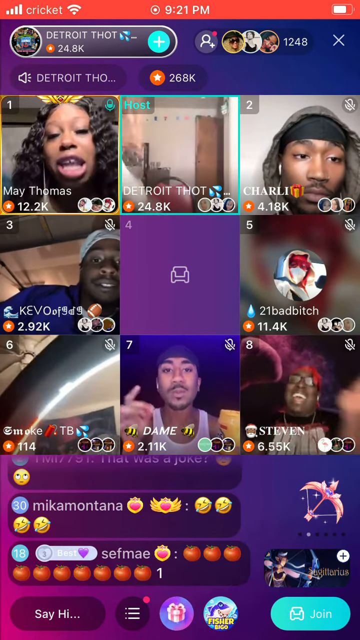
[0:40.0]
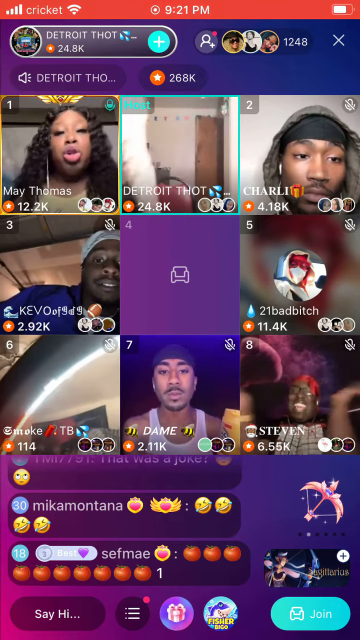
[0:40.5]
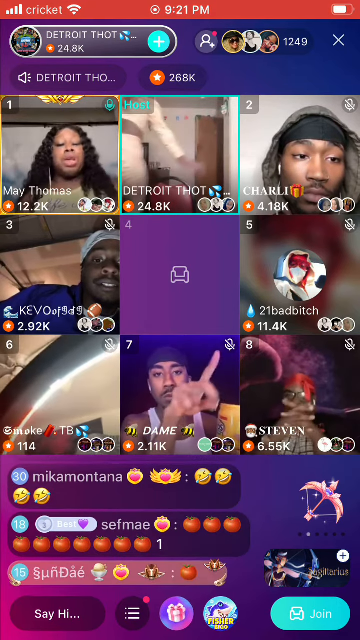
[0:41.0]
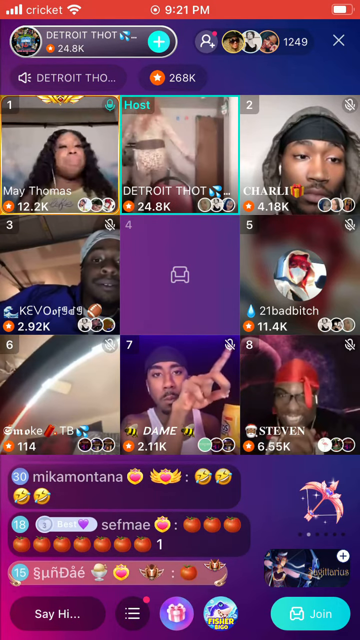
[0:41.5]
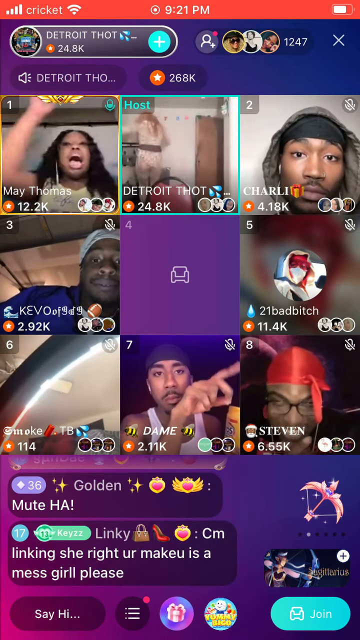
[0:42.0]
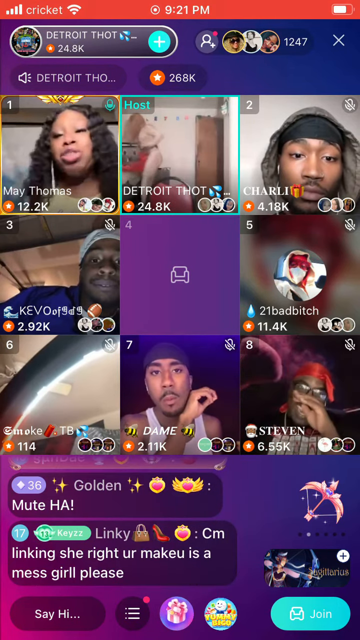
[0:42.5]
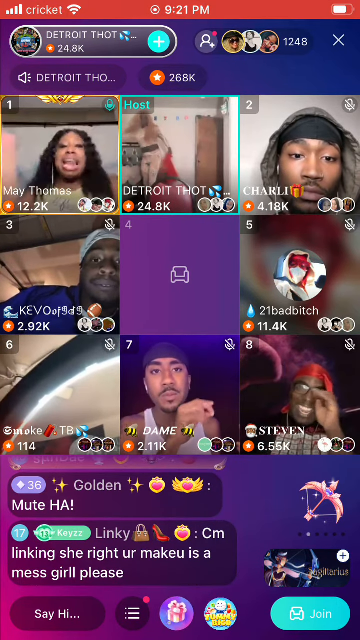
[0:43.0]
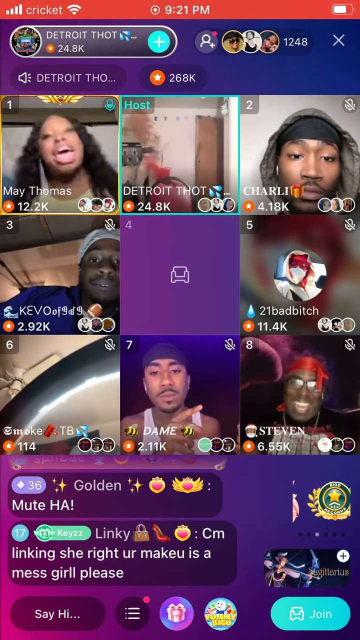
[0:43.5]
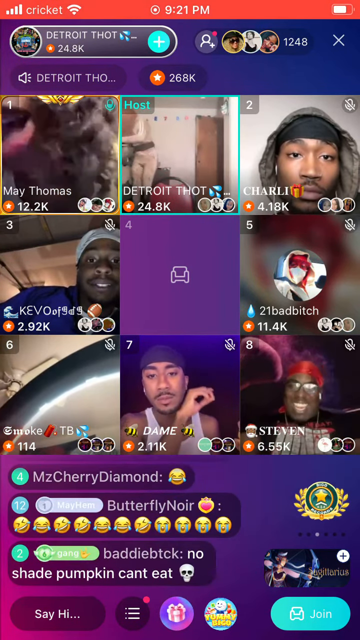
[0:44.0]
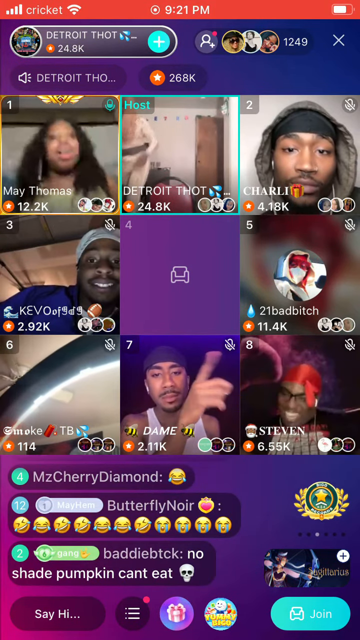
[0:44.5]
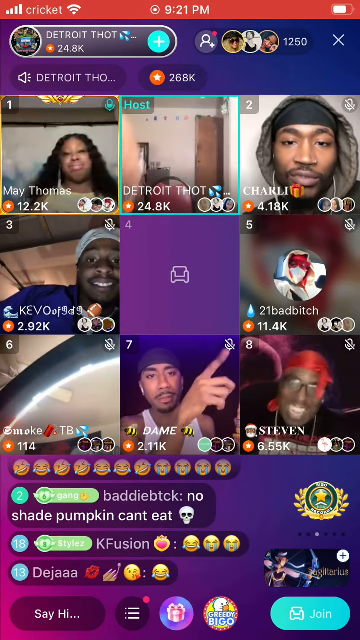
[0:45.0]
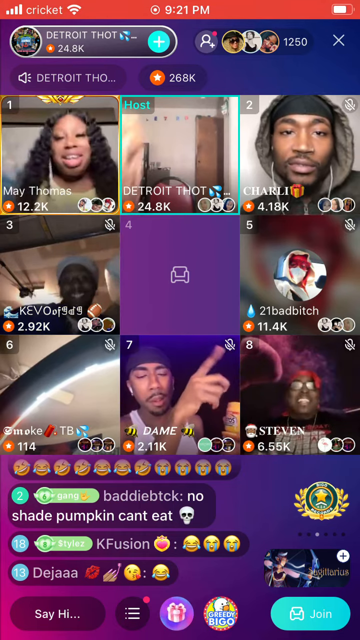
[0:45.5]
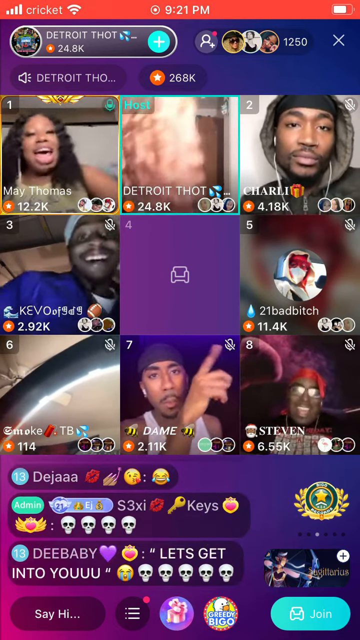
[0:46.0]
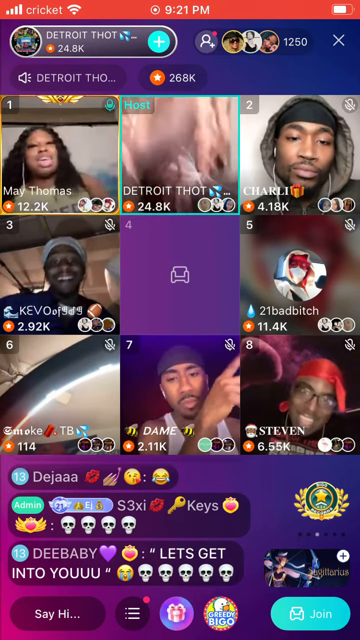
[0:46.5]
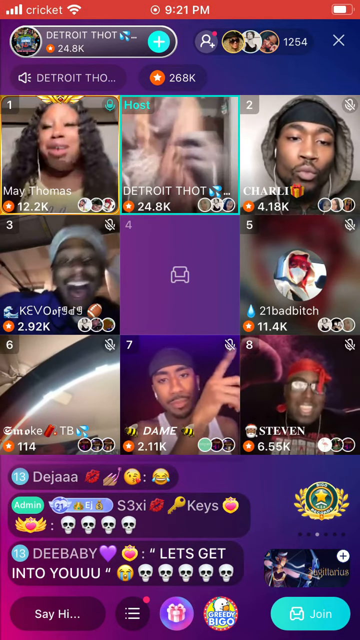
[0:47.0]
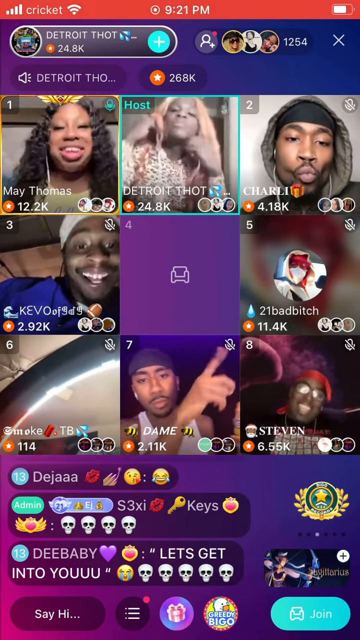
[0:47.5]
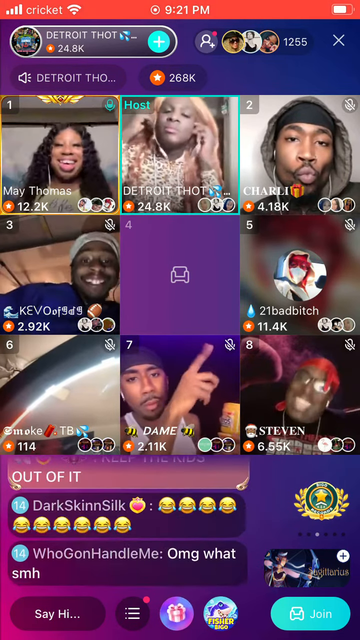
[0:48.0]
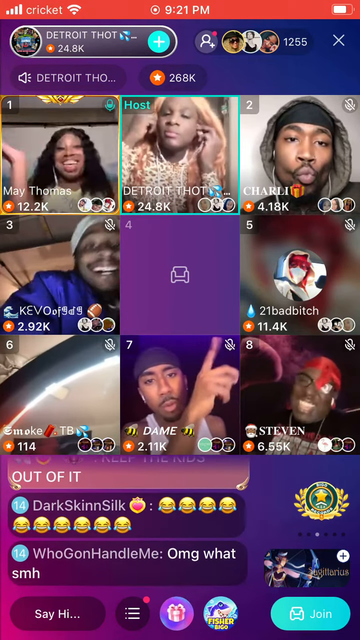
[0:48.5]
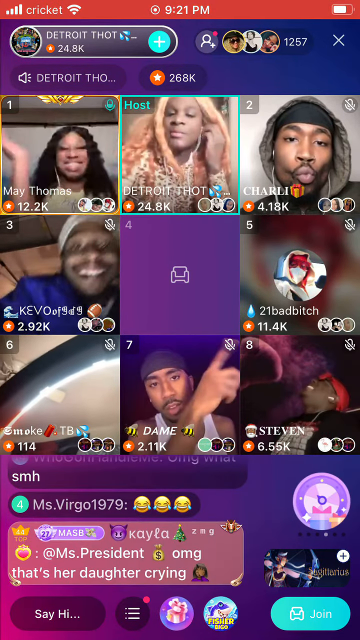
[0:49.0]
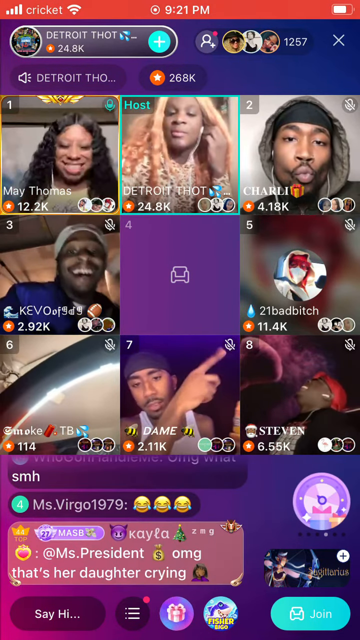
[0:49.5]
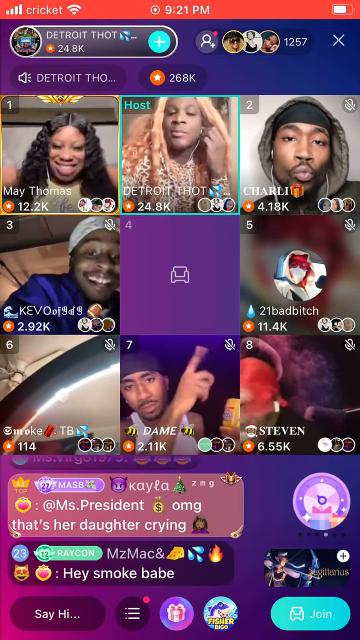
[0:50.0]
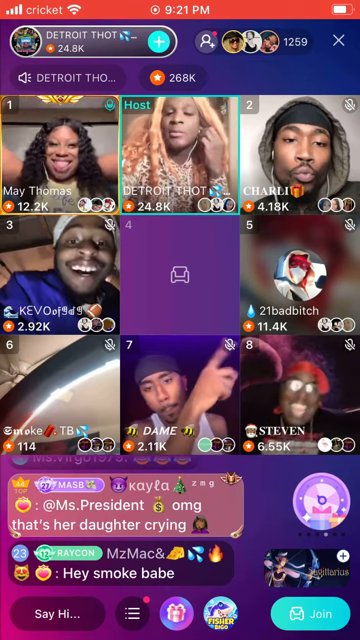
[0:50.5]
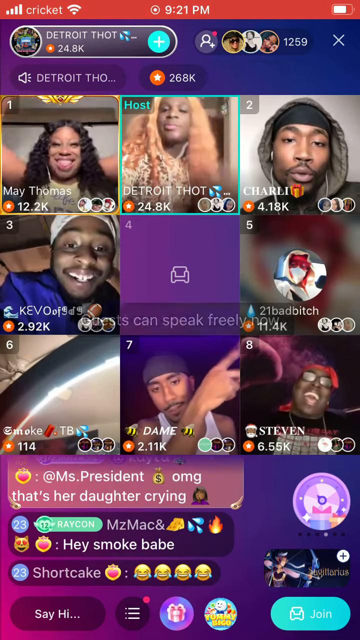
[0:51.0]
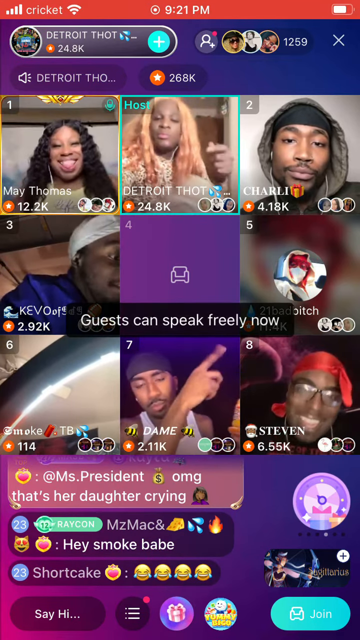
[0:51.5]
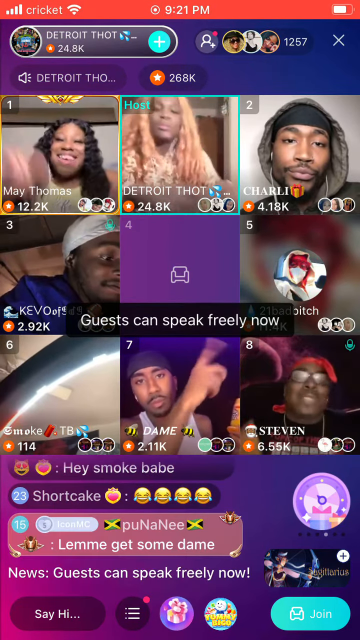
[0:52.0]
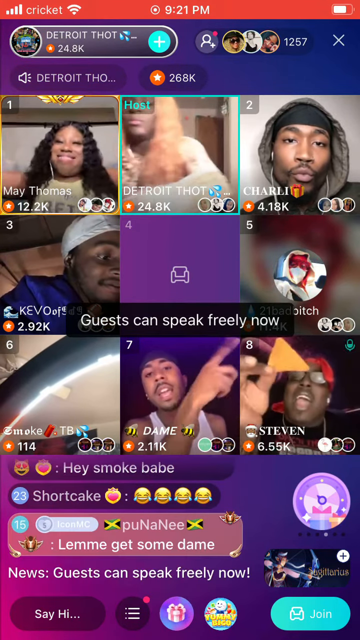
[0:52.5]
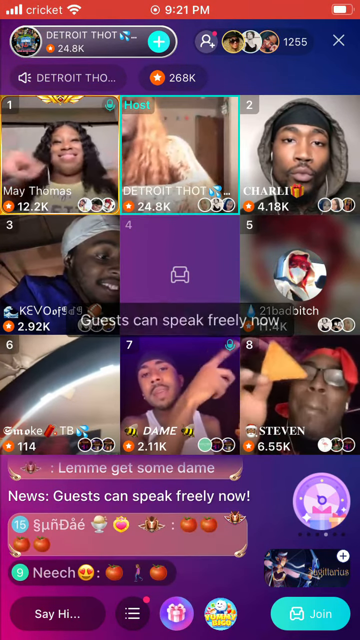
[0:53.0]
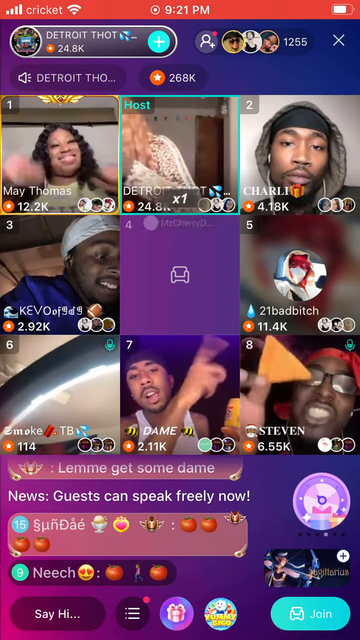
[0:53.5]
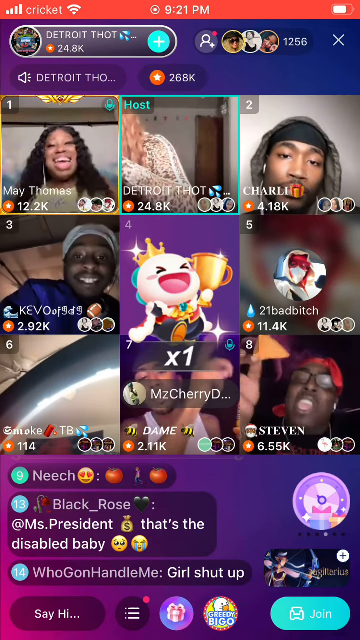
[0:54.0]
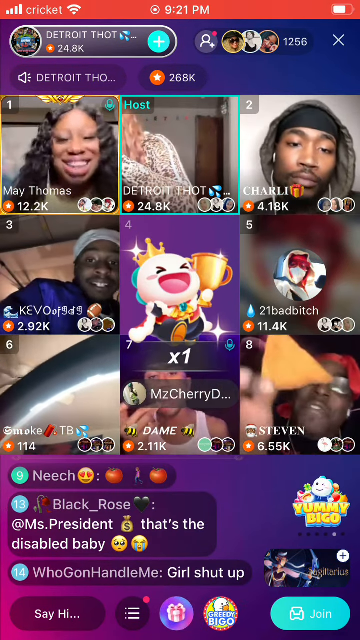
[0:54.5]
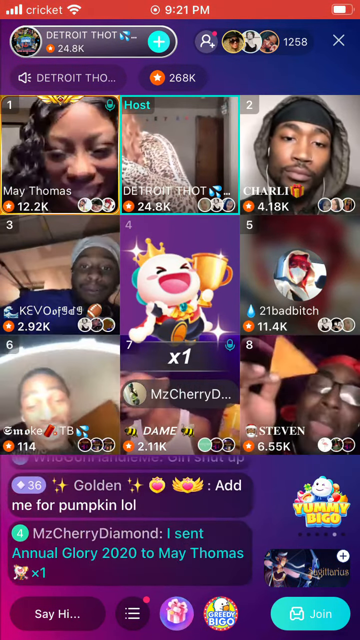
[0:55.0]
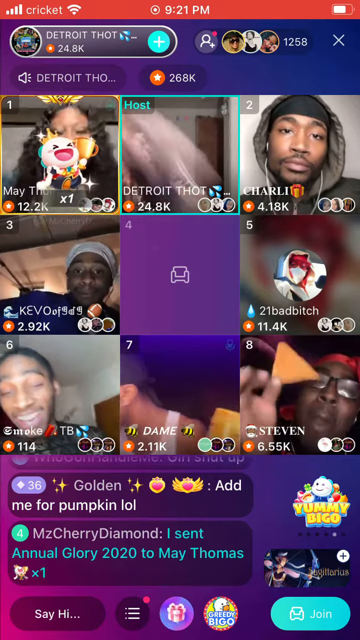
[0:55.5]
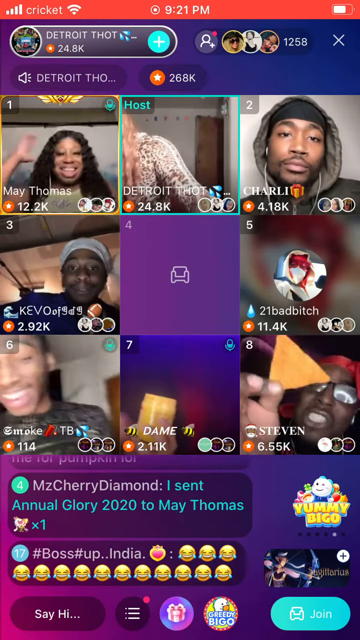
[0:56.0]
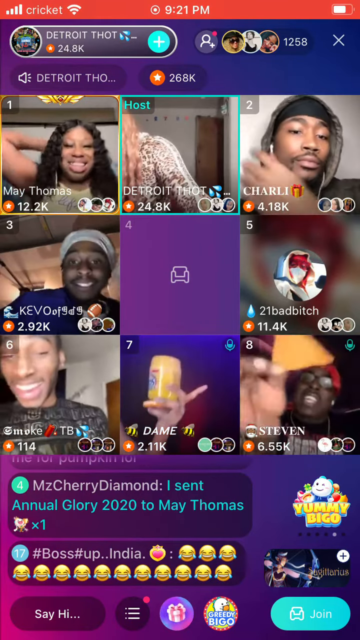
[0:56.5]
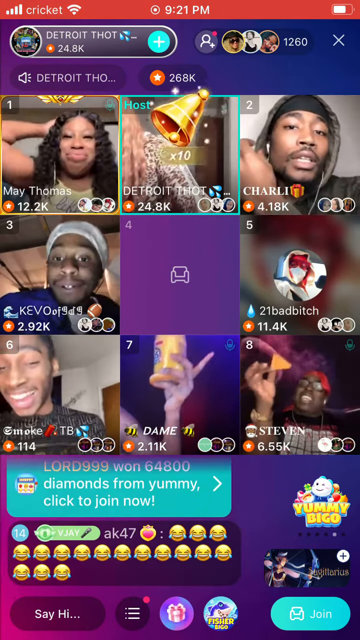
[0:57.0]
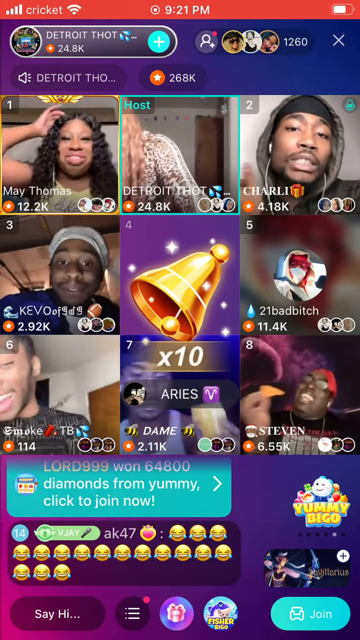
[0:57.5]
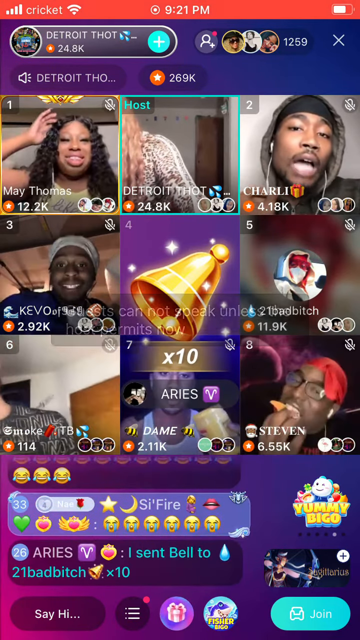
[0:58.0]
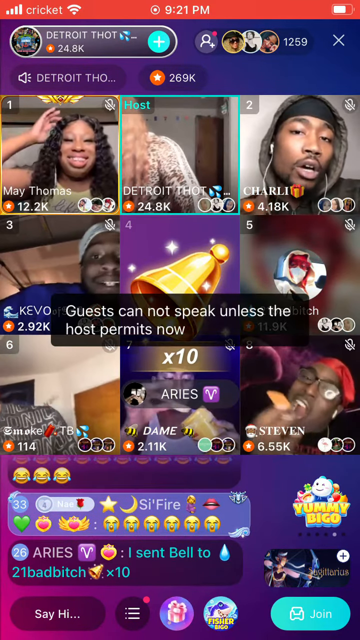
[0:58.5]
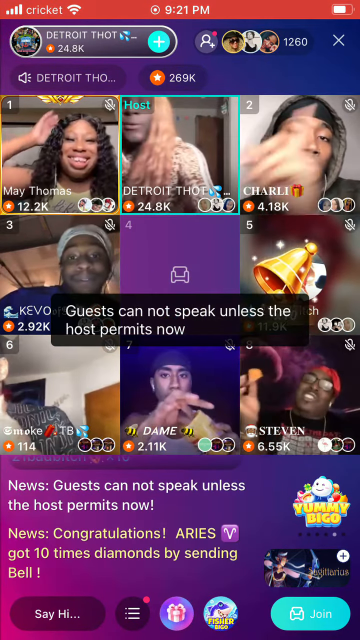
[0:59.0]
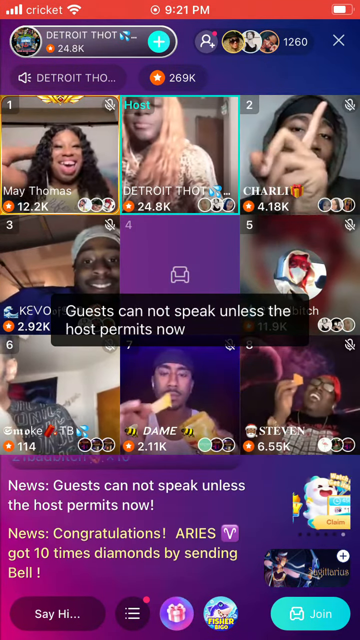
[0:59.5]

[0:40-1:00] The individuals keep moving around. The lady in the top left makes facial expressions and waves her hands around, and some of the individuals at the bottom make a lot of hand motions, cleaning up. Someone brings a Dorito chip into frame. More pop-ups and icons from the chat appear, apparently donations. It seems about 1200 people are watching the stream, and the many participants are possibly doing a group collab stream. The setting stays within the live stream application, with the text "Detroit thought" shown, along with information about the stream, including the chat, some of the viewers and their names, and some of the people in the collaborative group stream and their names.